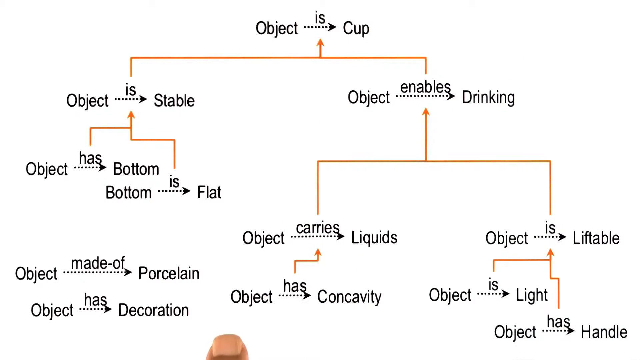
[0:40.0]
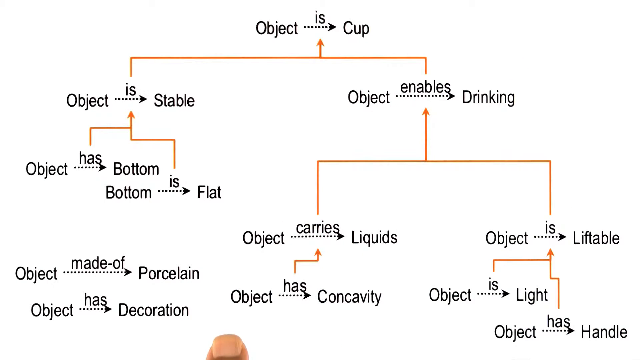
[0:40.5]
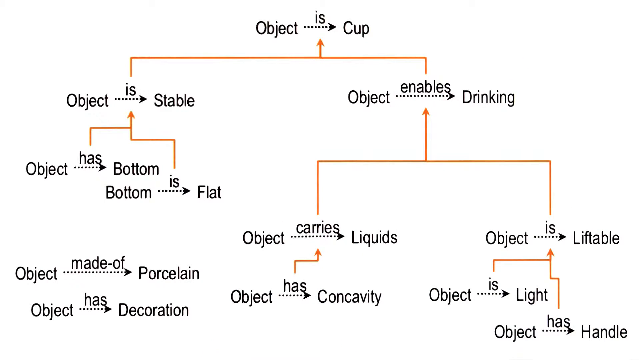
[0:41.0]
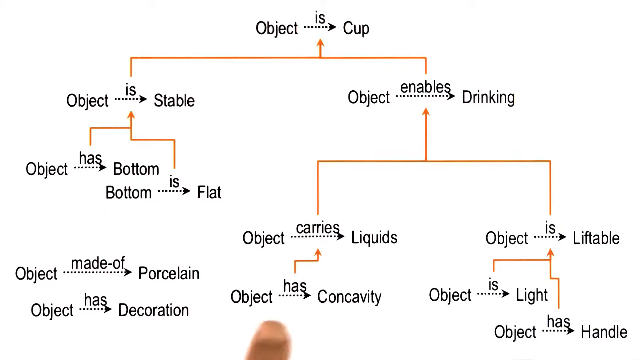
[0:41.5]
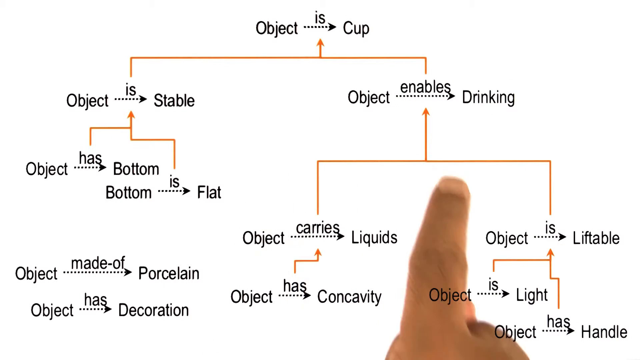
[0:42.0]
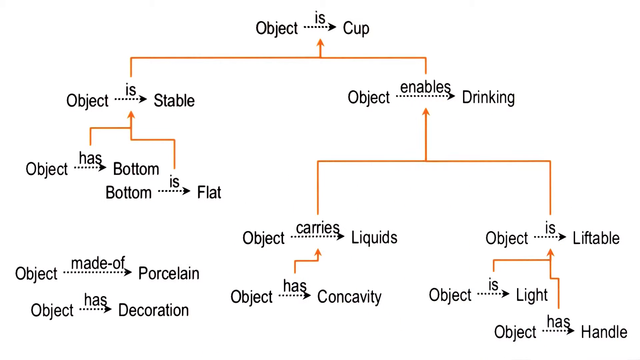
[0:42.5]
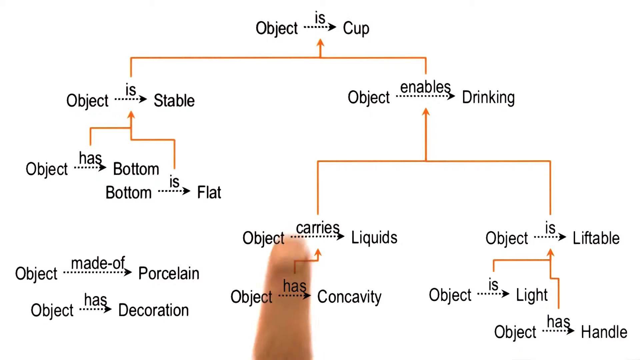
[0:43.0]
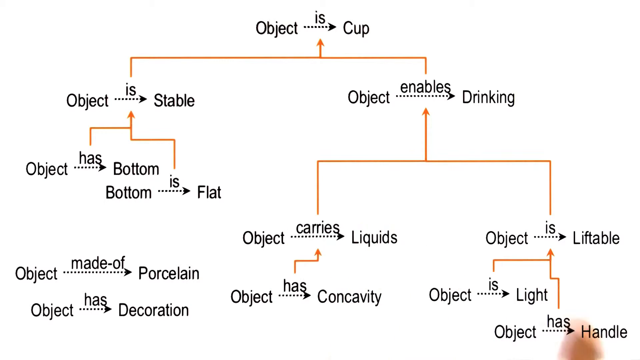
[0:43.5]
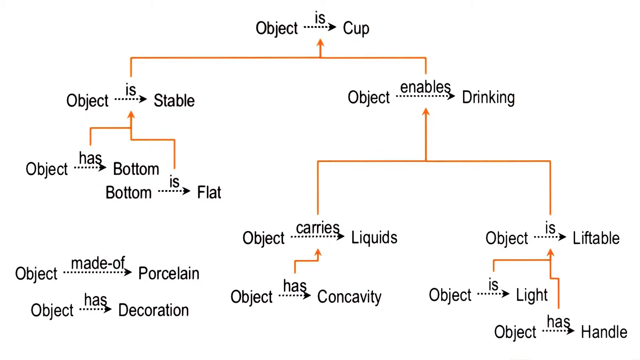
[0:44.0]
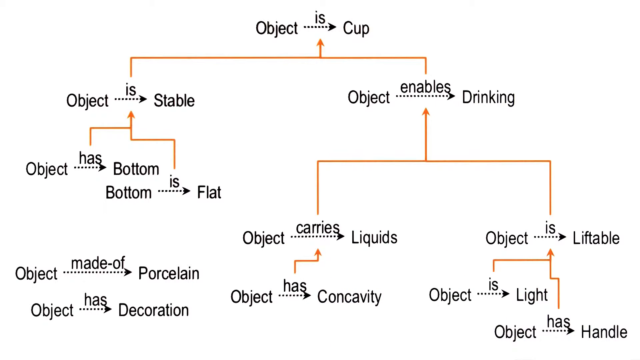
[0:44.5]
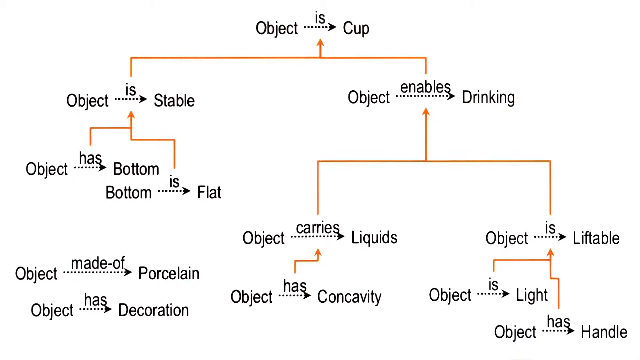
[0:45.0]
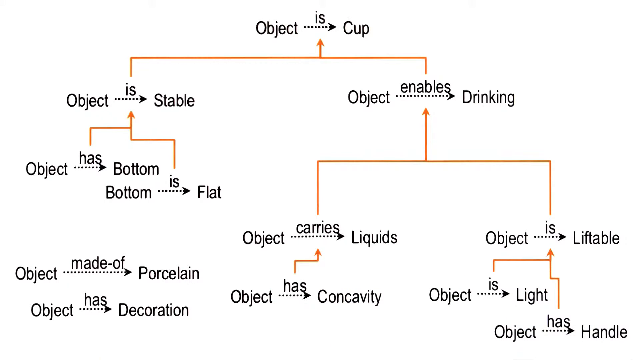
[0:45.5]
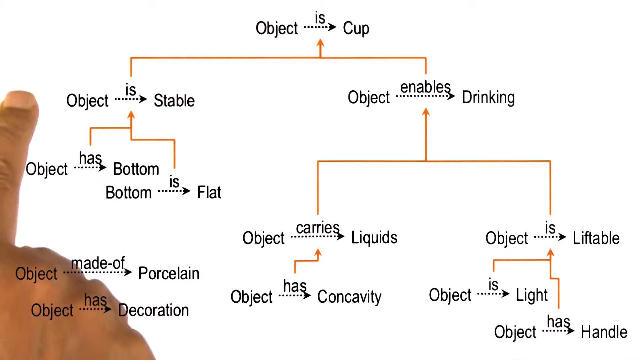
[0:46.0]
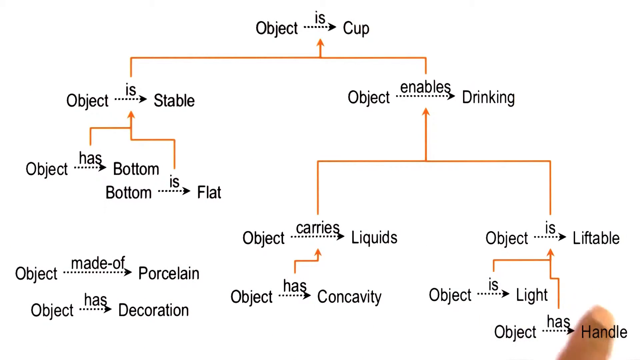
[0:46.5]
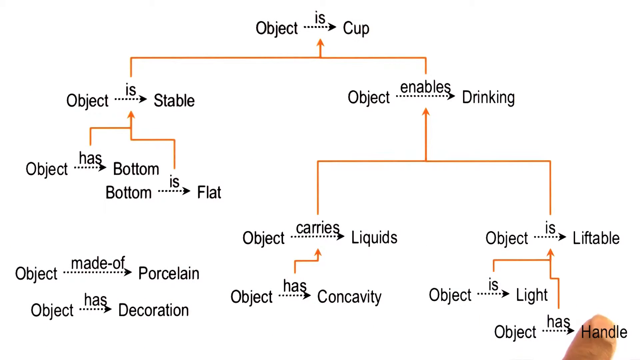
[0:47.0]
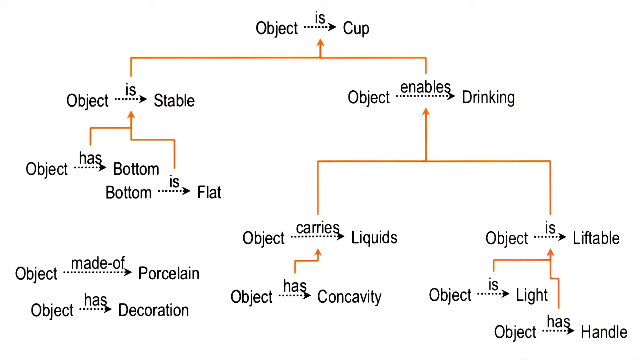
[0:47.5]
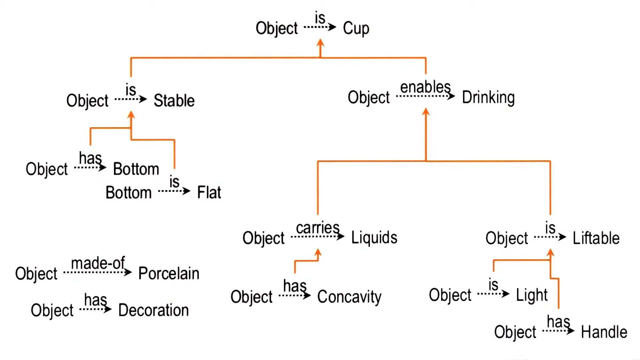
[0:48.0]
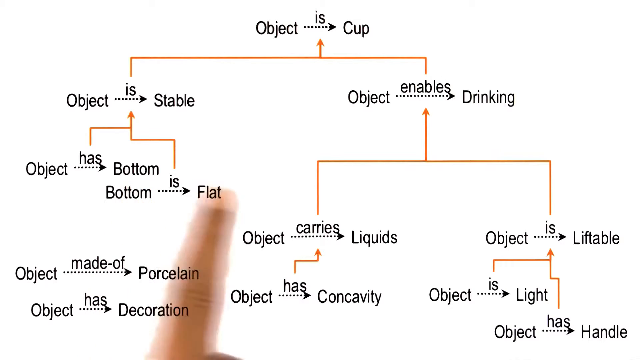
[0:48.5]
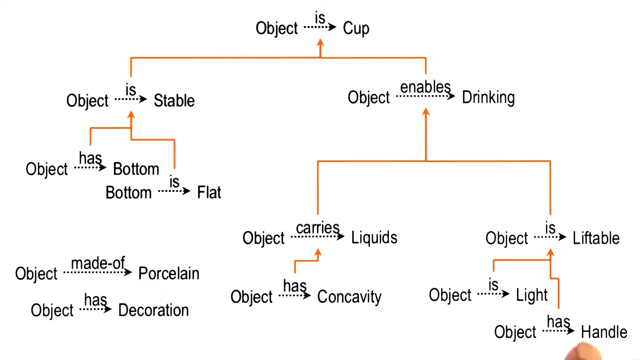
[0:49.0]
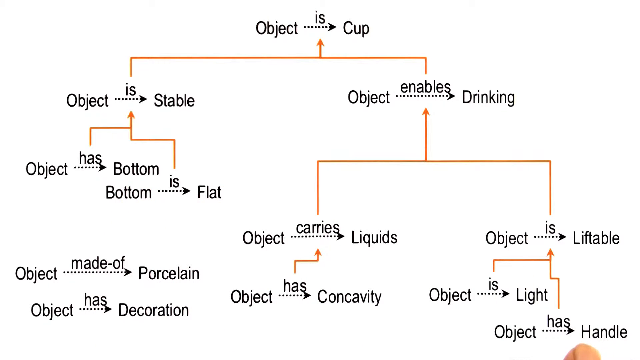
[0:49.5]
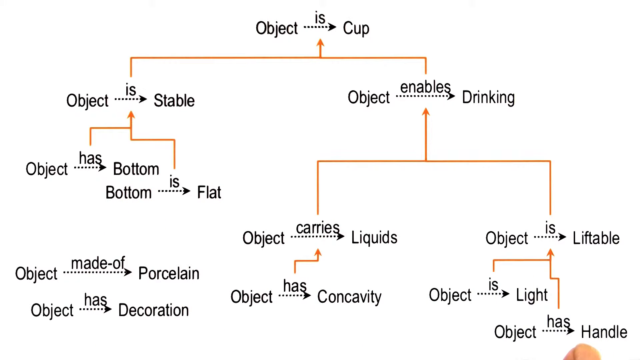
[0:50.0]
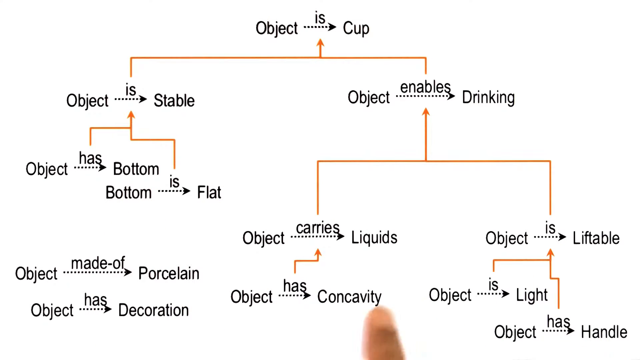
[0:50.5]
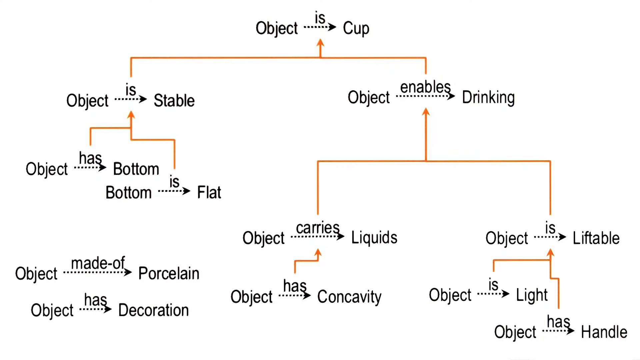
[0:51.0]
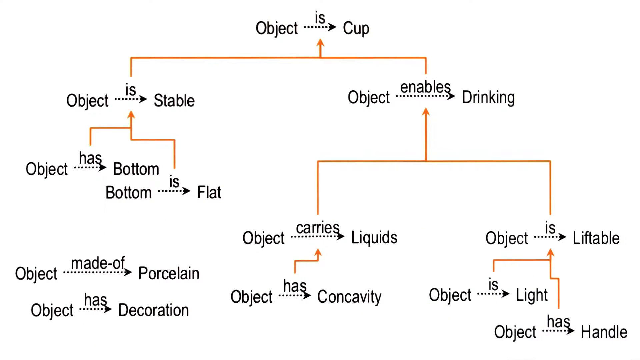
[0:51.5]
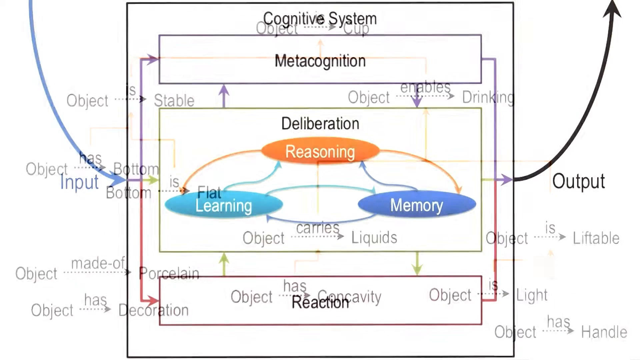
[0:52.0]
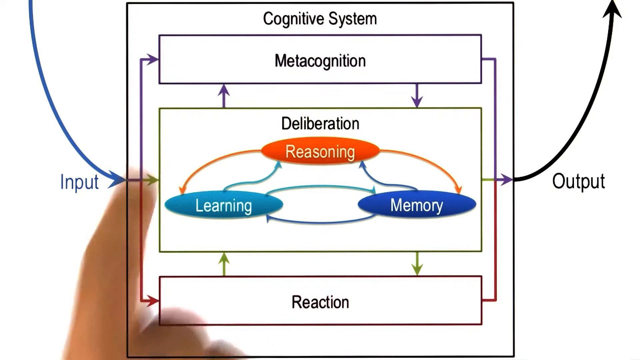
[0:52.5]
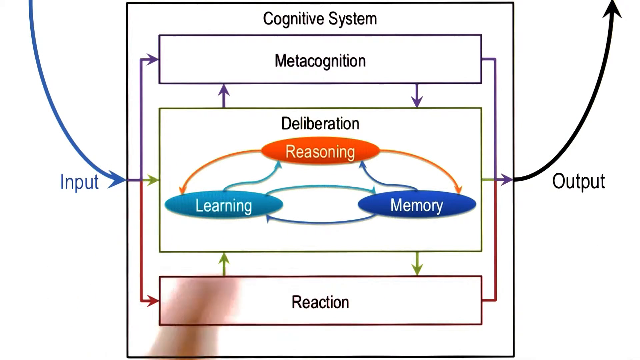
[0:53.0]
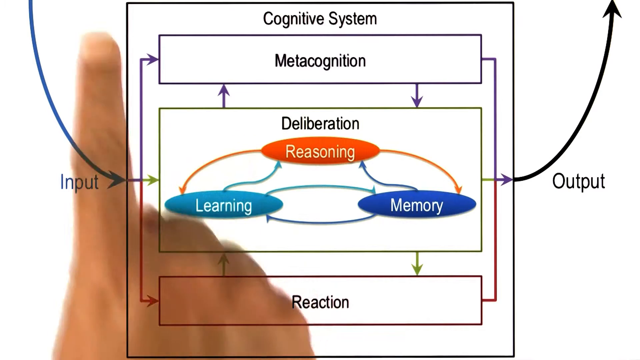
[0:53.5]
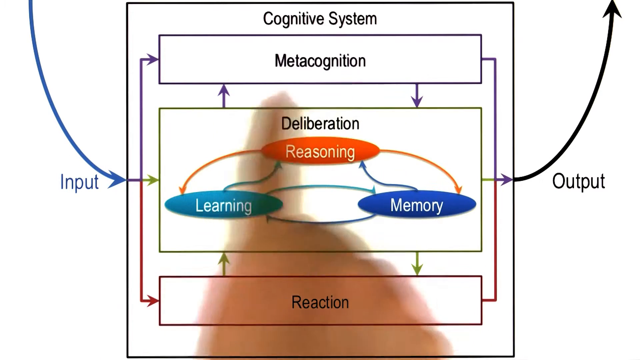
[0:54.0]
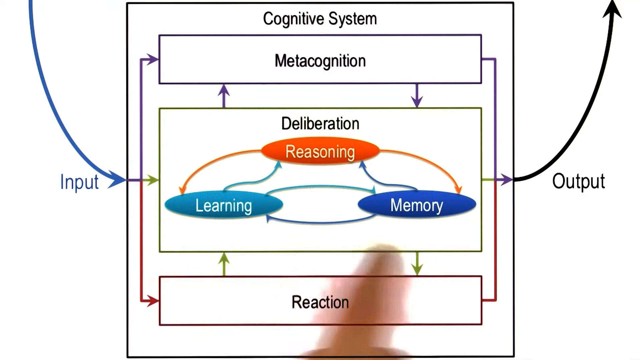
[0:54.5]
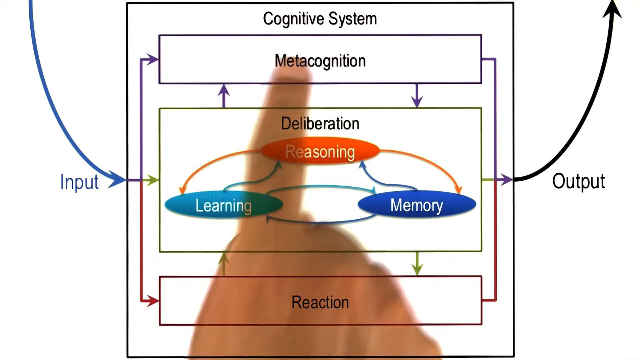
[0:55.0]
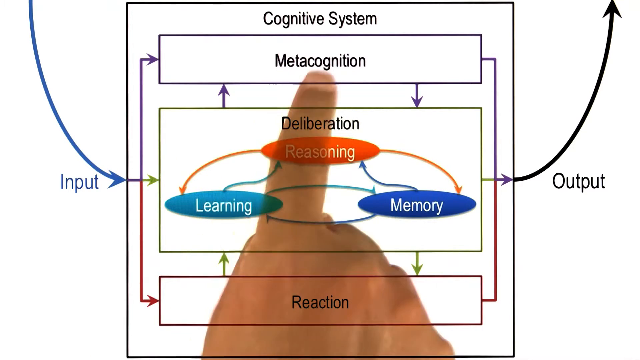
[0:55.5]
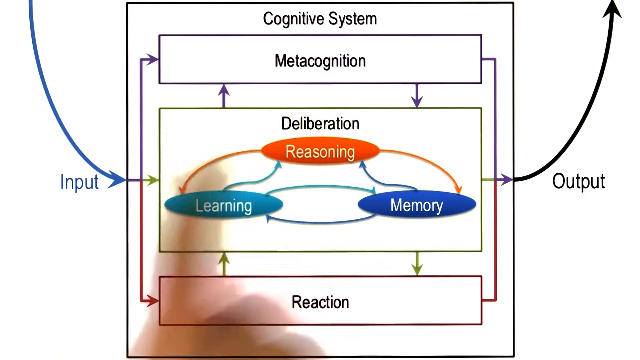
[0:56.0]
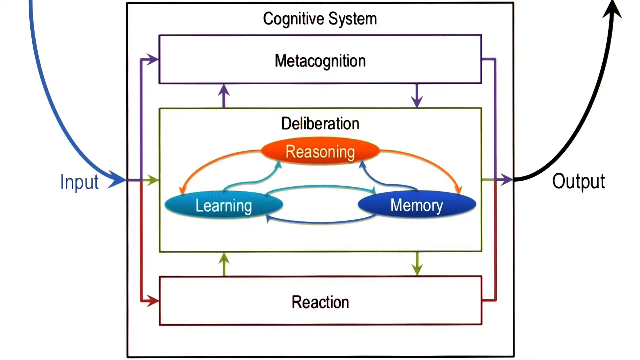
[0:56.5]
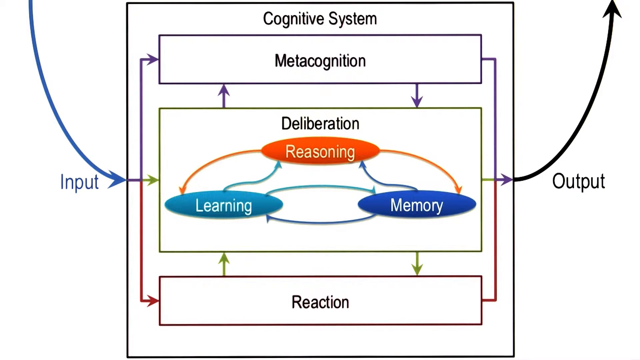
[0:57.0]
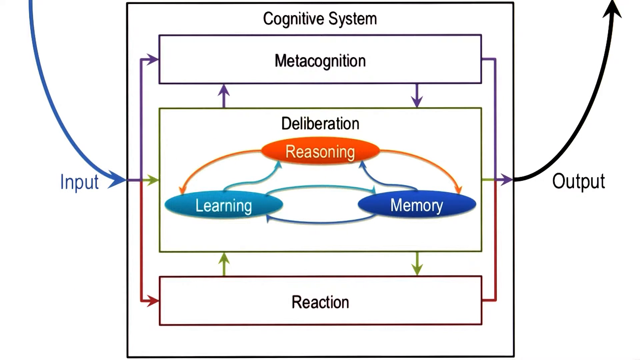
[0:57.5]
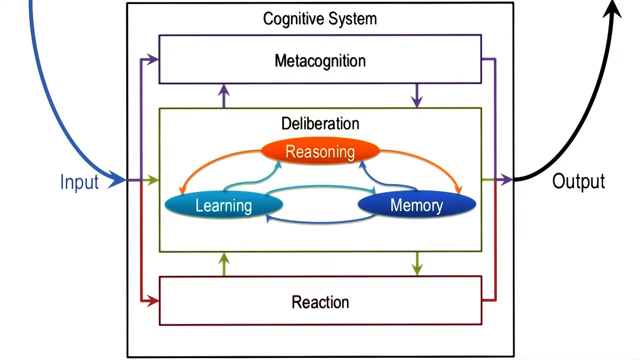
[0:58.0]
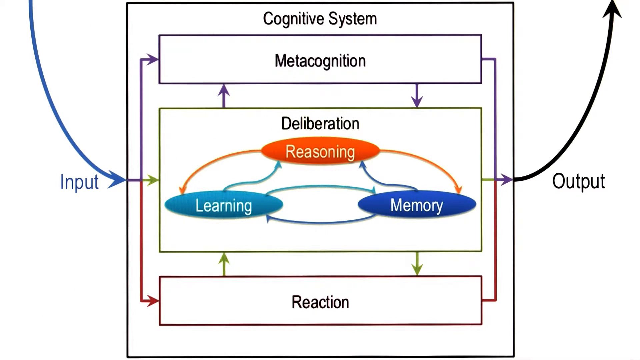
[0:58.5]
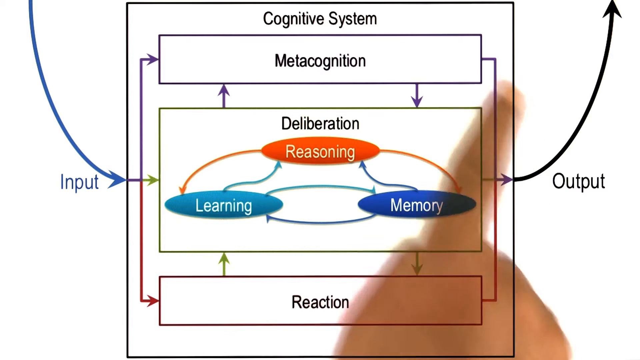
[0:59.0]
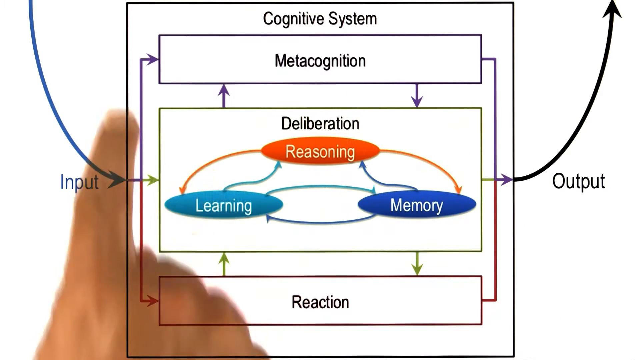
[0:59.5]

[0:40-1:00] The explanation of the objects screen continues, with wording such as "object is in cup", "object is stable", "object enables drinking", "object has a bottom", "object is flat", "object carries liquids" and "object is liftable". Orange arrows appear, and the background is plain white. The video then moves back to the previous screen showing the cognitive system and metacognition, and the hand points to the wording on it. The input and output arrows, deliberation, reasoning, learning, memory and reaction are on the screen, and there appears to be further emphasis on how the whole system works in its entirety. No human faces are seen, only the right hand pointing to the words on the screen.